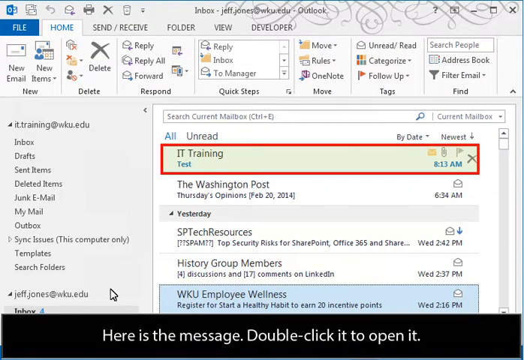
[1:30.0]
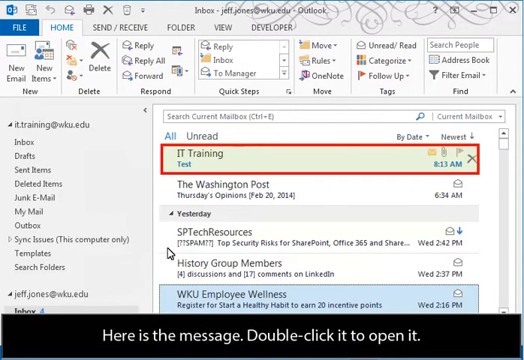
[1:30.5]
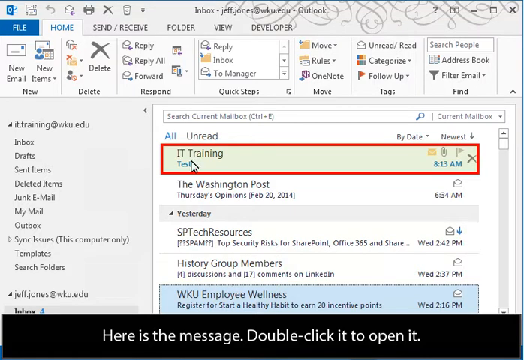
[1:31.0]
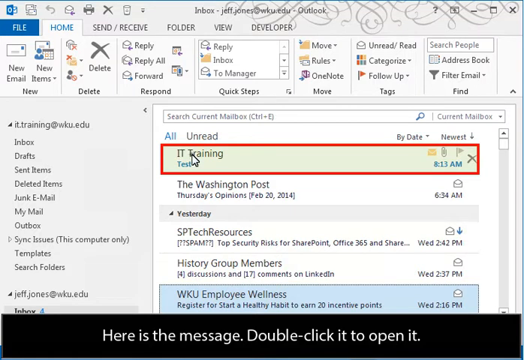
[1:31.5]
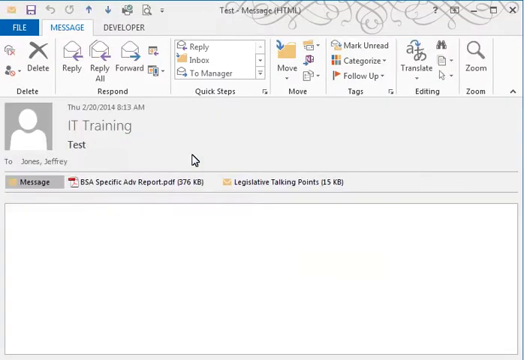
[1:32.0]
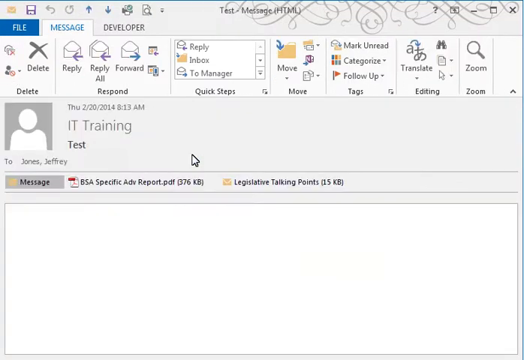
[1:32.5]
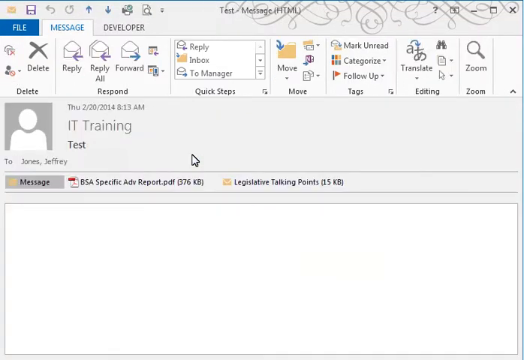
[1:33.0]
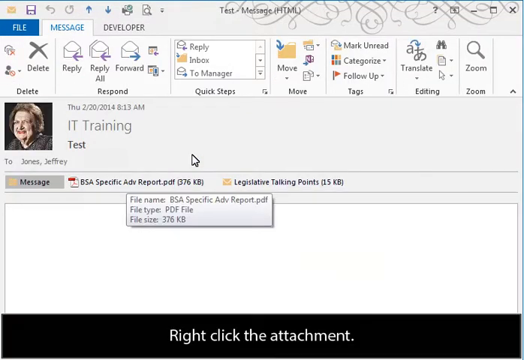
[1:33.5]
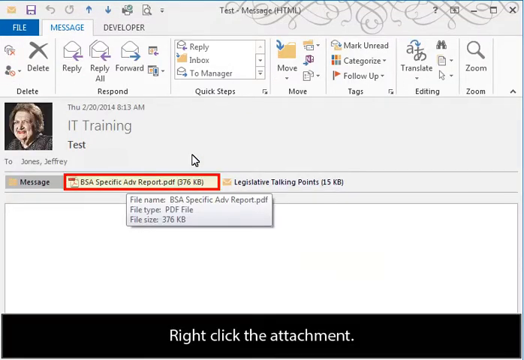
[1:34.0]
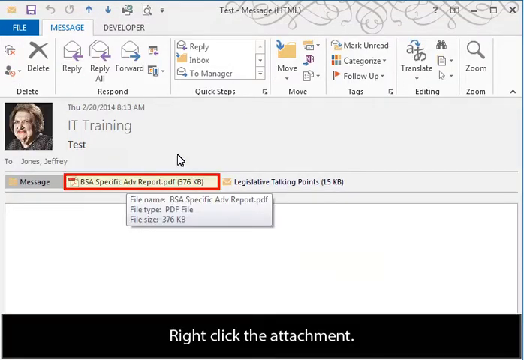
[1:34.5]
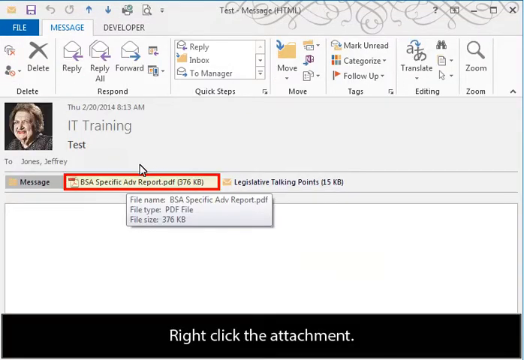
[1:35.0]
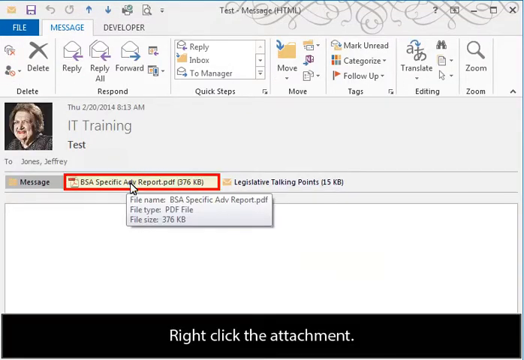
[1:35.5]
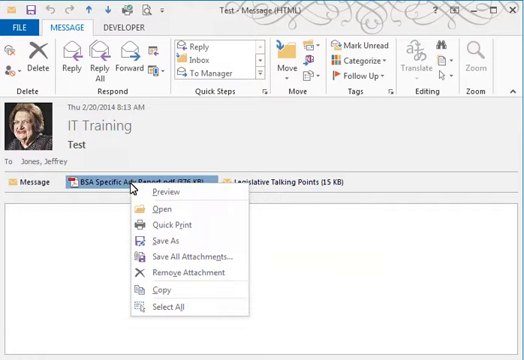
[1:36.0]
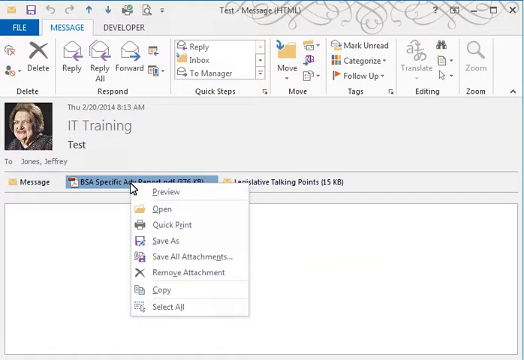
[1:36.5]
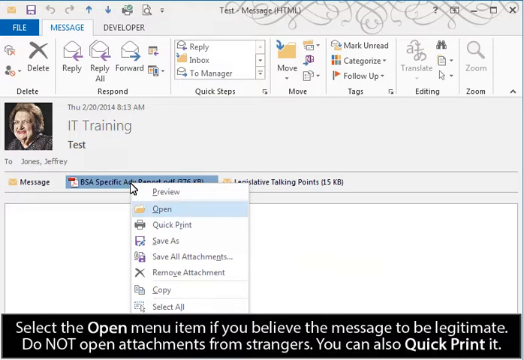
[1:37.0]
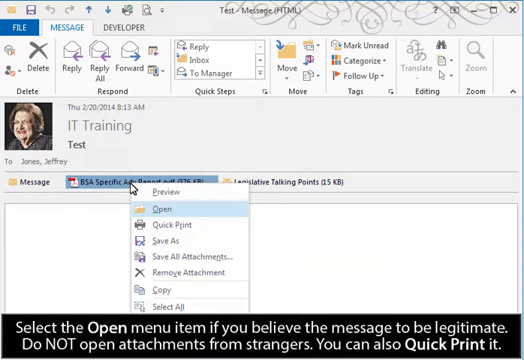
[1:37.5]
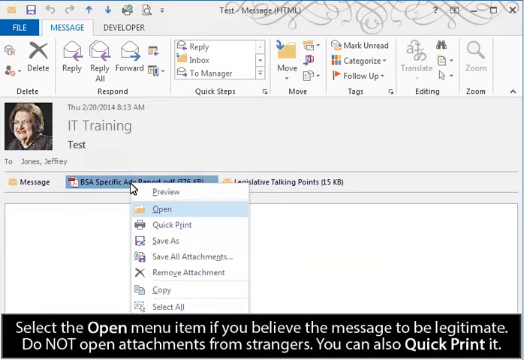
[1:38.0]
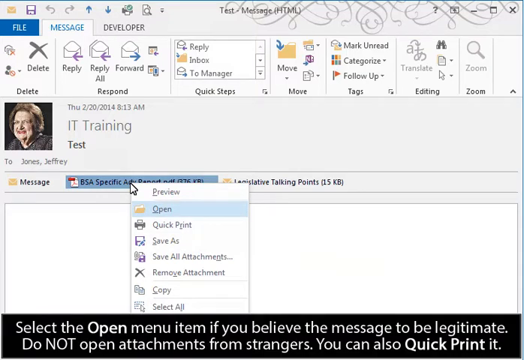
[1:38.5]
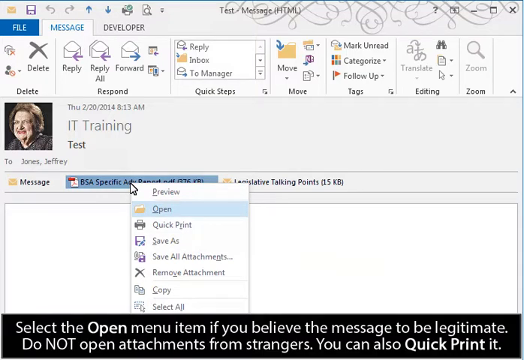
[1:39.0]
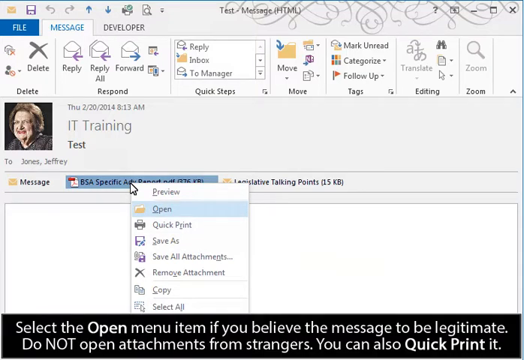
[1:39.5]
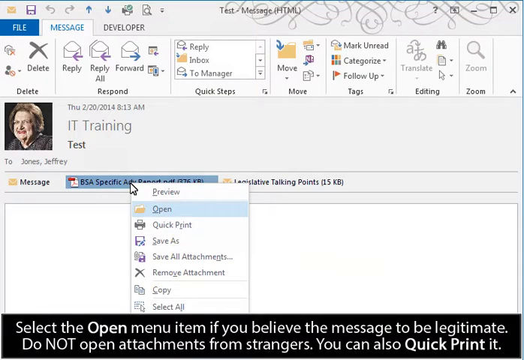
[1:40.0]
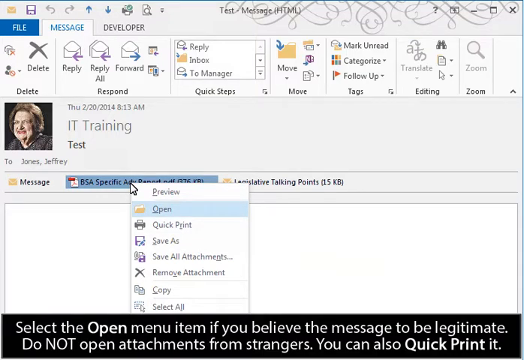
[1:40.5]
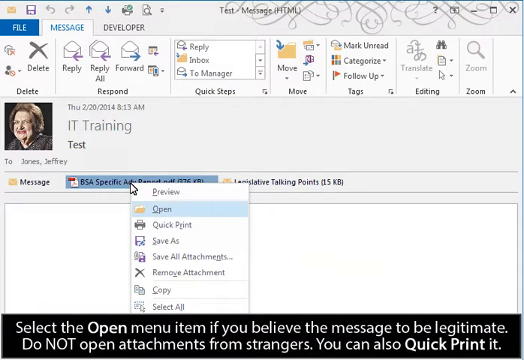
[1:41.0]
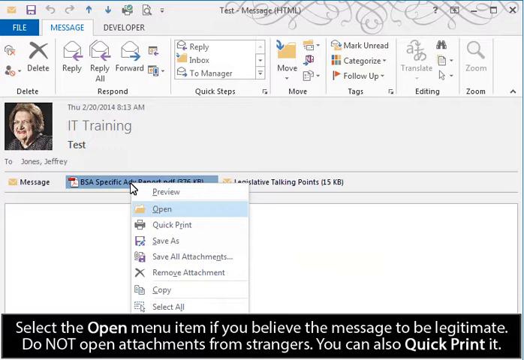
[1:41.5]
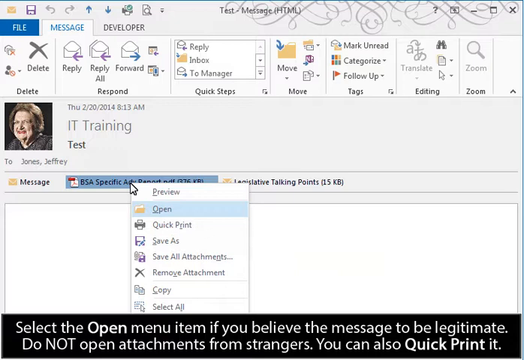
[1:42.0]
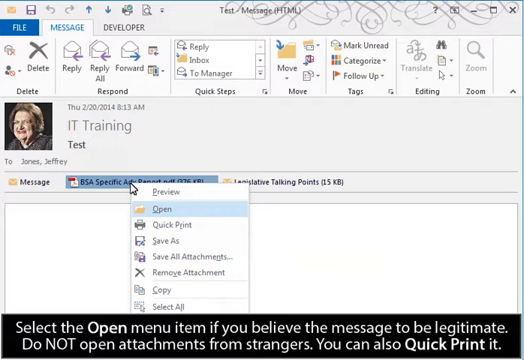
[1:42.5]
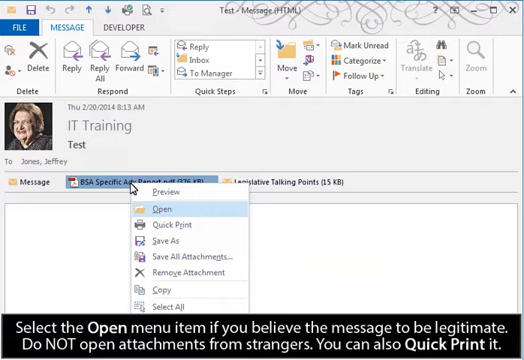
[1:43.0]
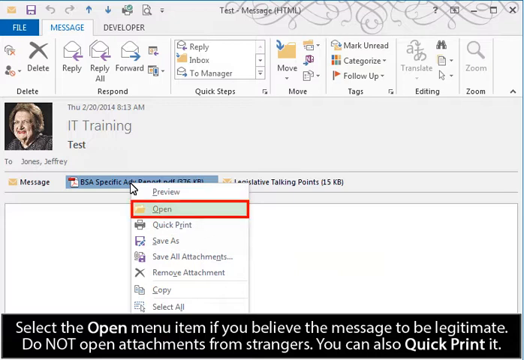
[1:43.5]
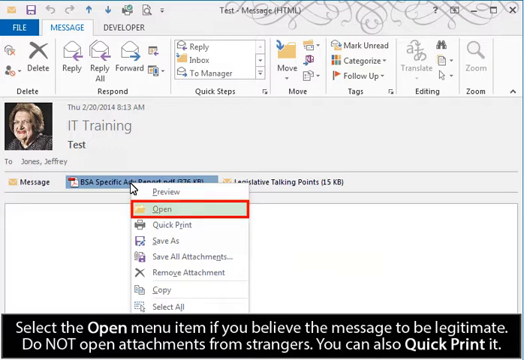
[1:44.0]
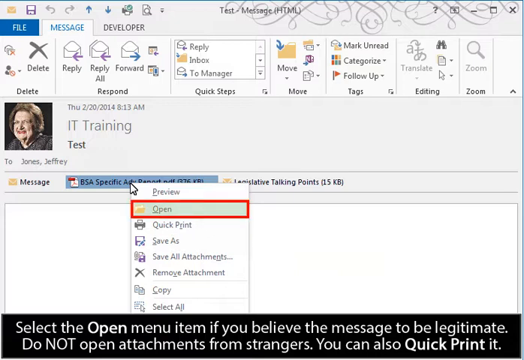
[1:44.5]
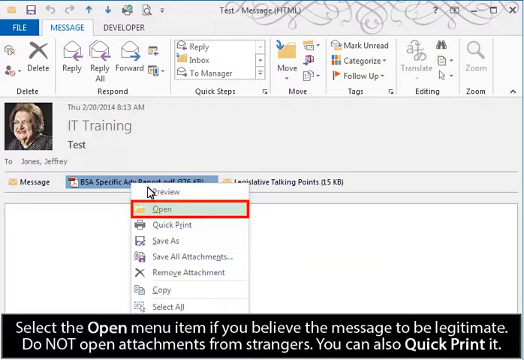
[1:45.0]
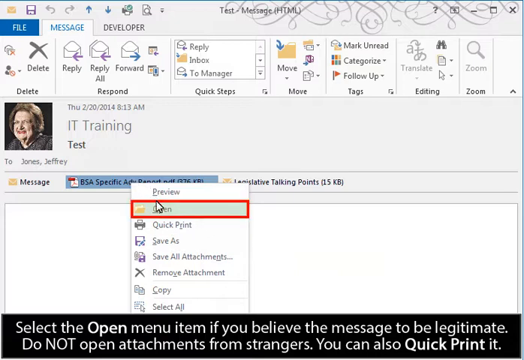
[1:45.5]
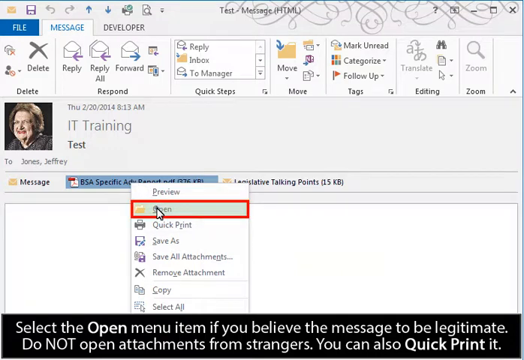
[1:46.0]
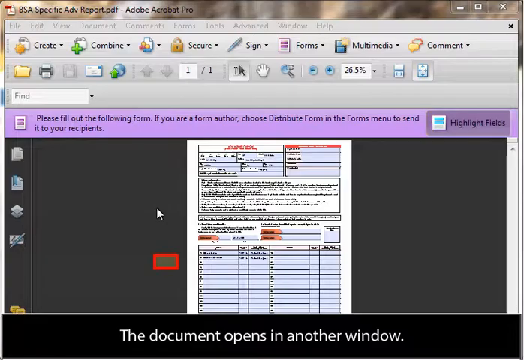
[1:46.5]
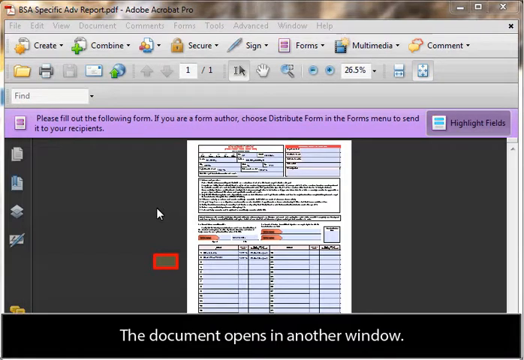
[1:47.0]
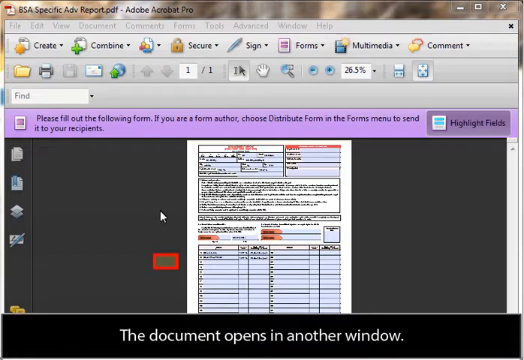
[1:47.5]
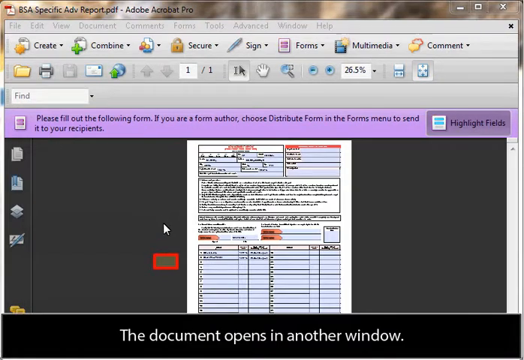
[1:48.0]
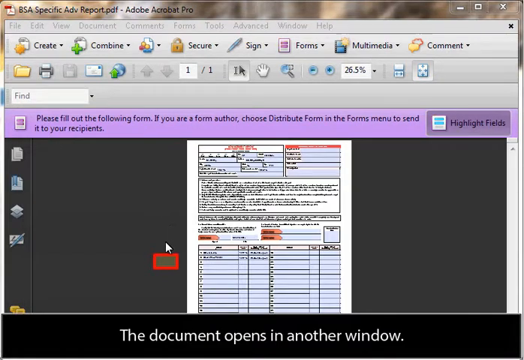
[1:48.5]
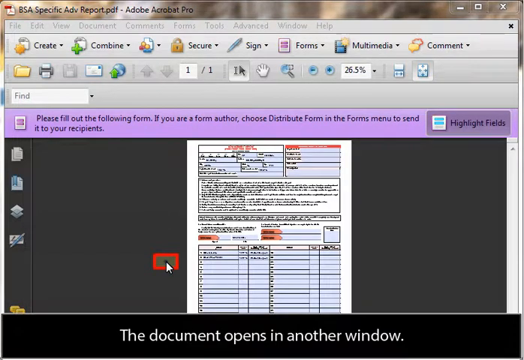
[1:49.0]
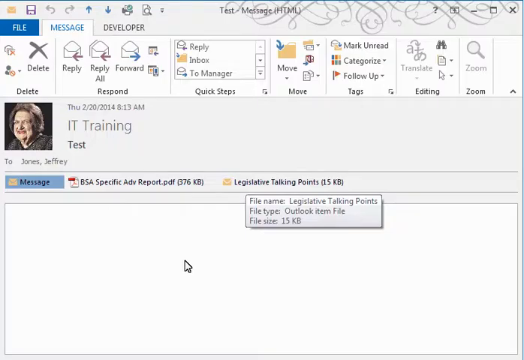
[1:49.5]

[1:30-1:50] The Outlook inbox for jeff.jones@wku.edu is shown. In the right panel listing the emails, the first email, titled "IT Training," is highlighted with a red square. The user clicks it, opening it: it has an empty subject box and a photo avatar of the sender, an old woman with chin-length brown hair, glasses and red lipstick. The PDF attachment titled "bsa specific adv report" is highlighted with a red square; the user clicks it, bringing up a menu, and clicks Open, which is highlighted with a red square. A new window pops up showing the BSA specific ADV report PDF in Adobe Acrobat Pro, with a small, blurry image of a form. To the left of the form is a gray rectangular box with a red square around it, and the user seems to click it, returning to the IT training test email with the woman's avatar.